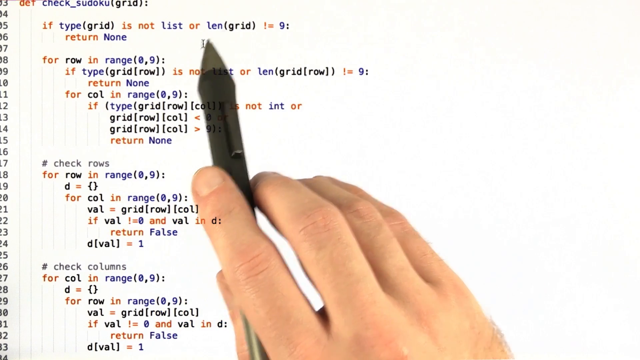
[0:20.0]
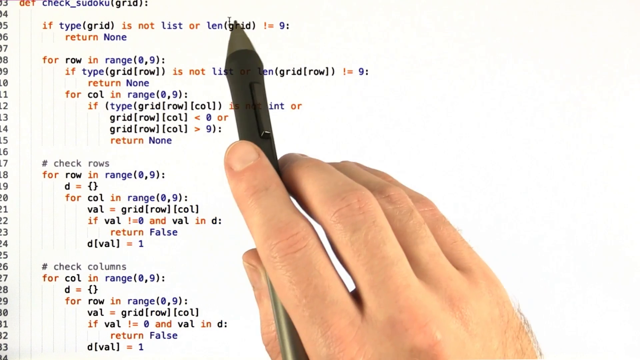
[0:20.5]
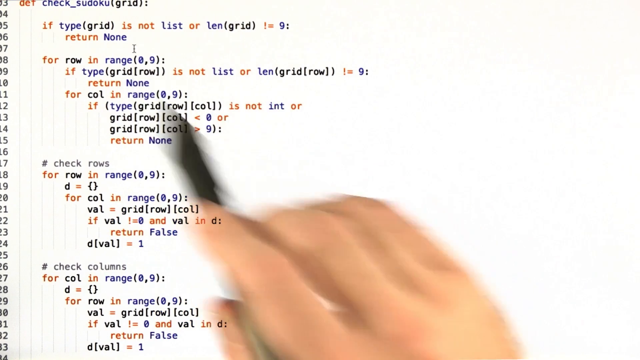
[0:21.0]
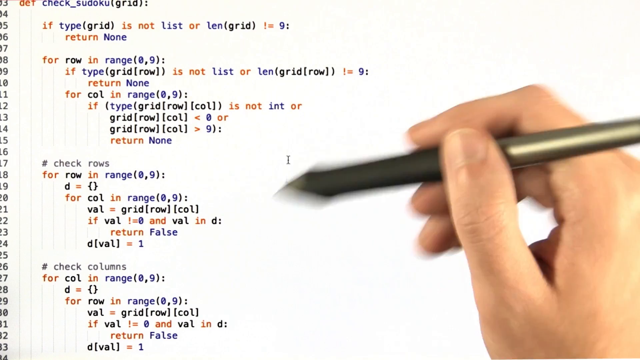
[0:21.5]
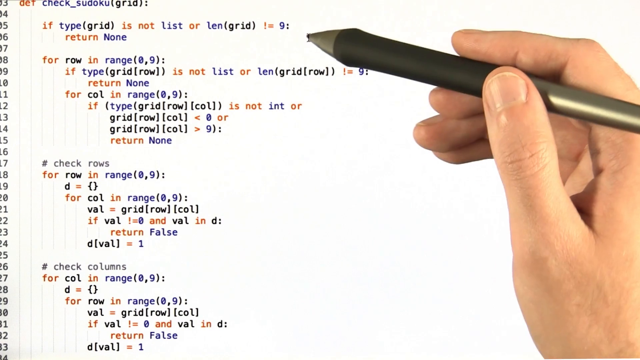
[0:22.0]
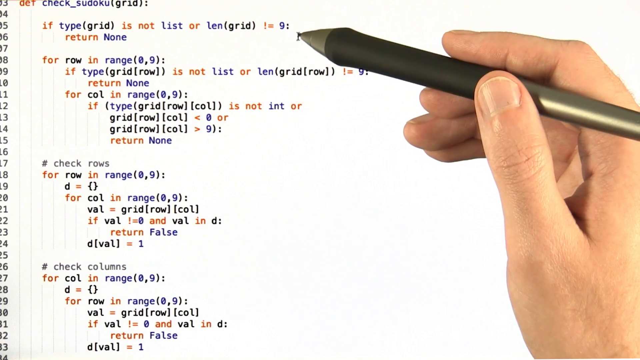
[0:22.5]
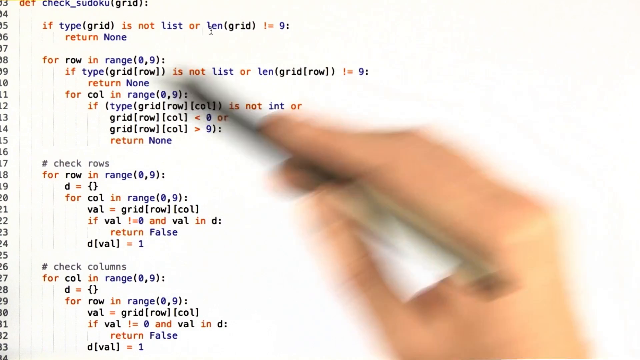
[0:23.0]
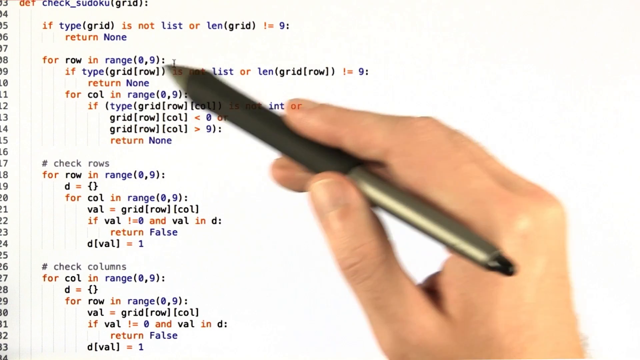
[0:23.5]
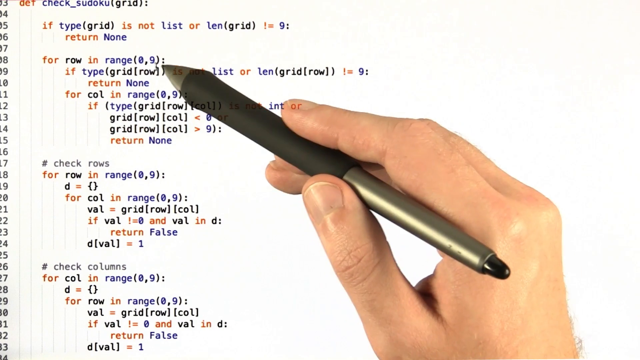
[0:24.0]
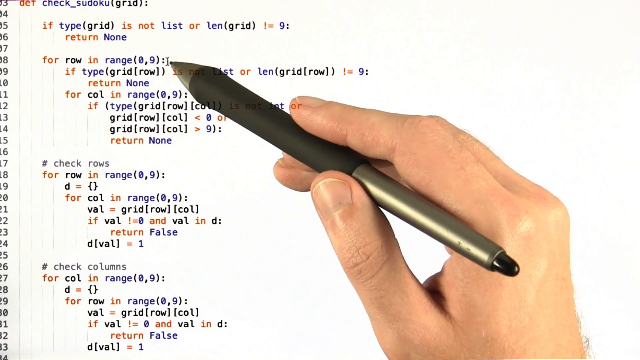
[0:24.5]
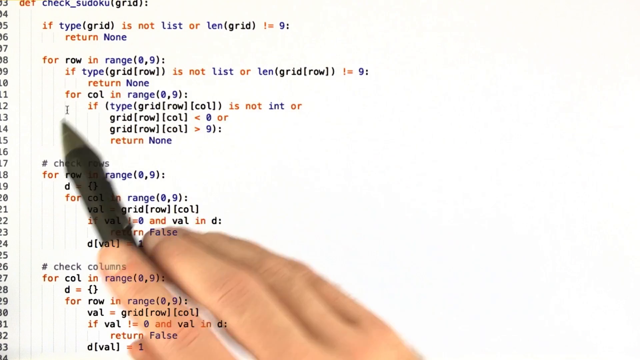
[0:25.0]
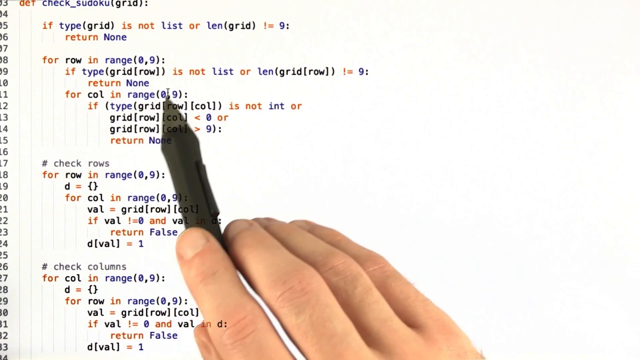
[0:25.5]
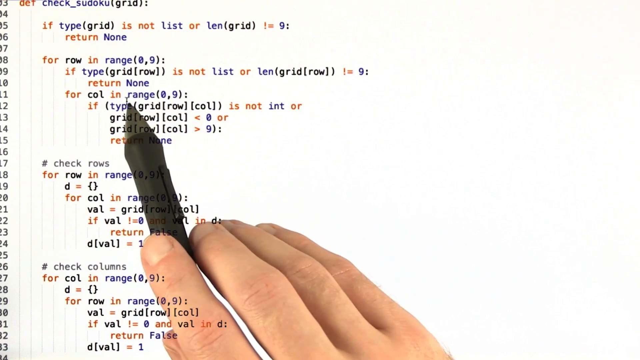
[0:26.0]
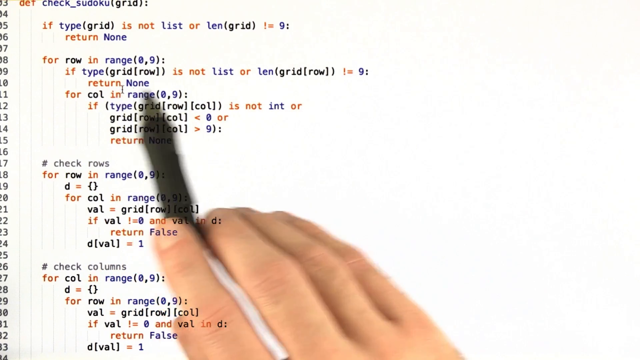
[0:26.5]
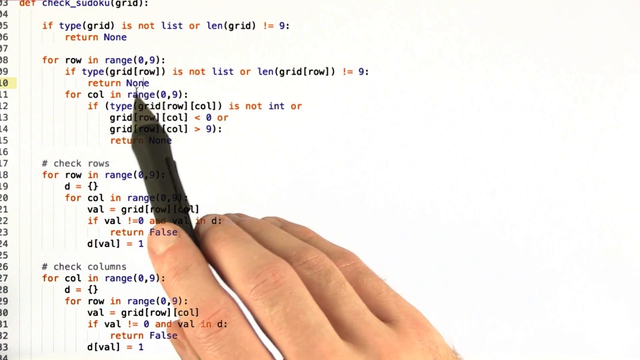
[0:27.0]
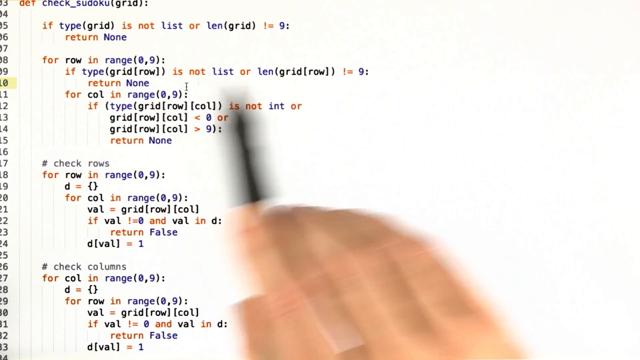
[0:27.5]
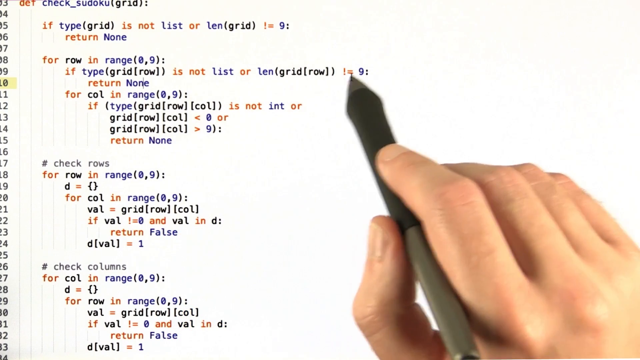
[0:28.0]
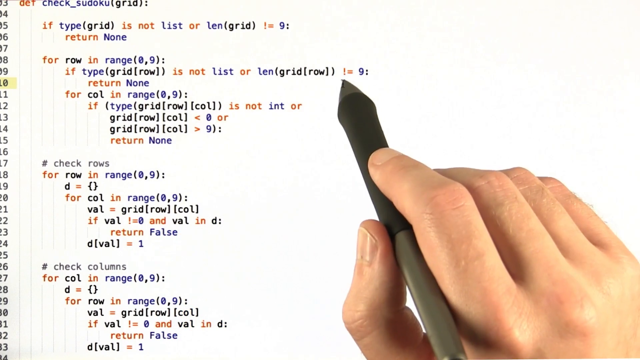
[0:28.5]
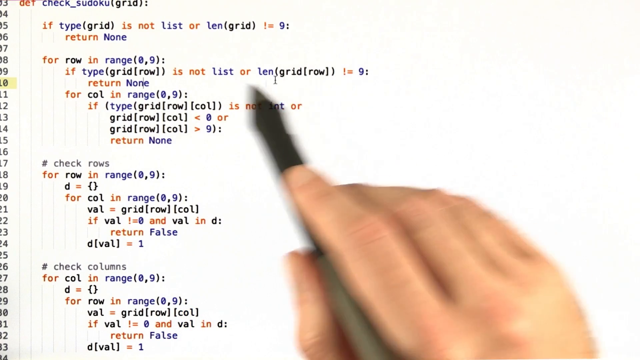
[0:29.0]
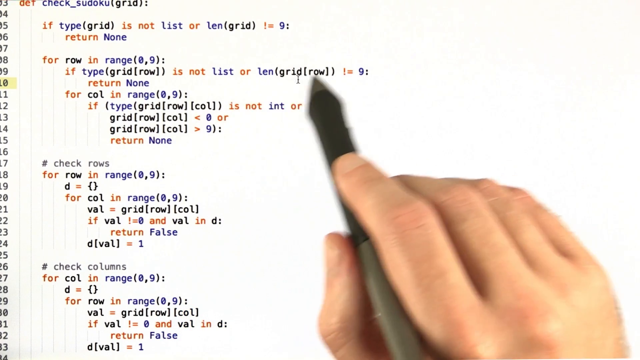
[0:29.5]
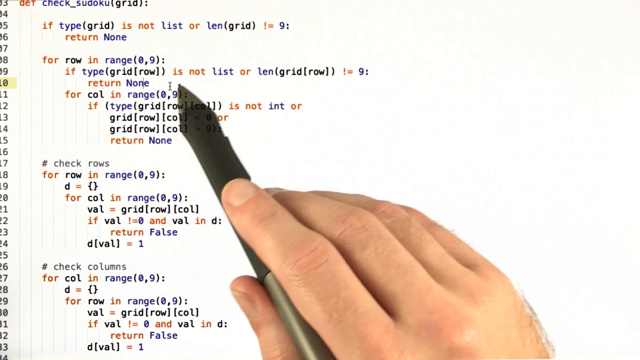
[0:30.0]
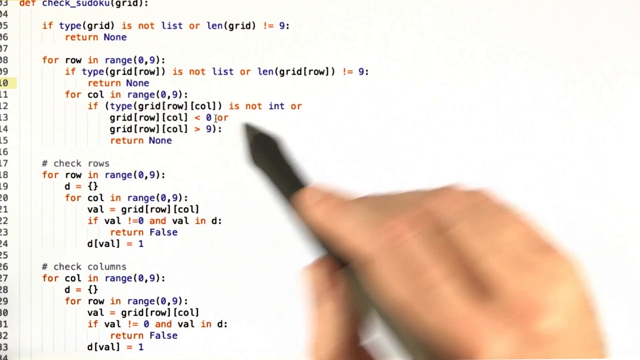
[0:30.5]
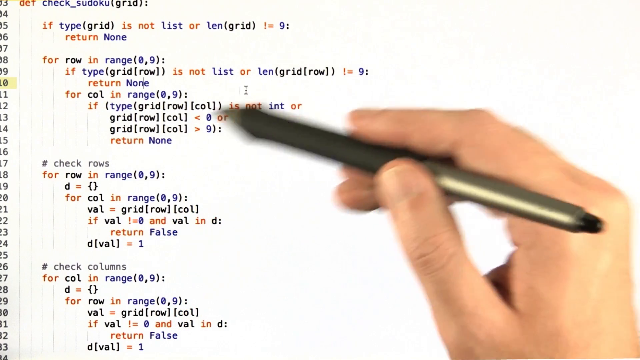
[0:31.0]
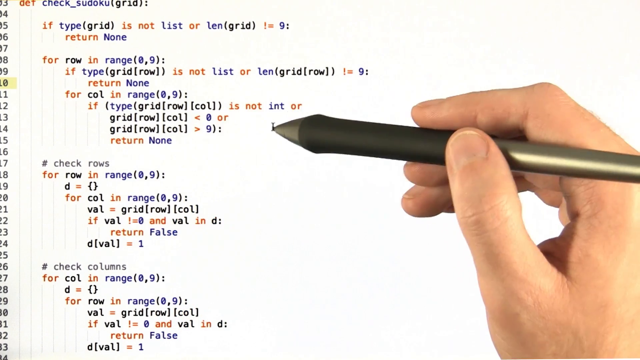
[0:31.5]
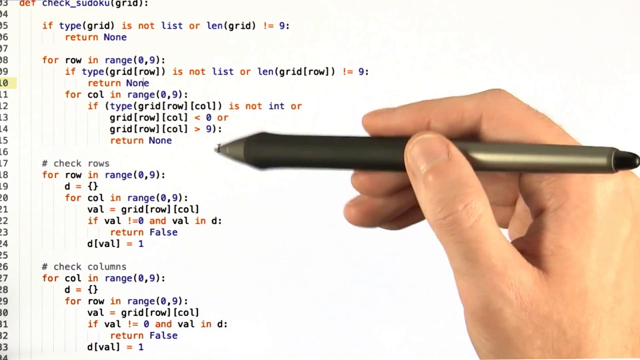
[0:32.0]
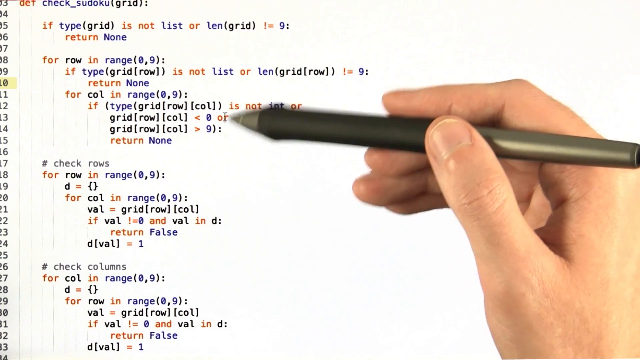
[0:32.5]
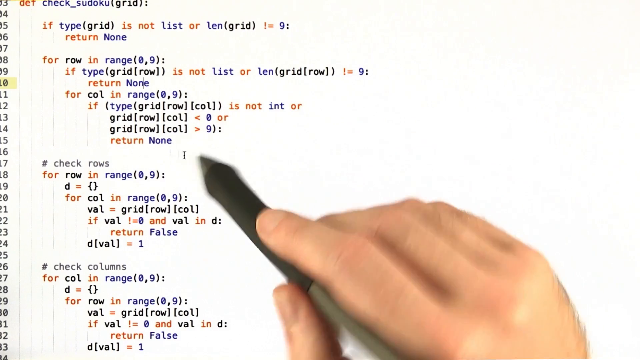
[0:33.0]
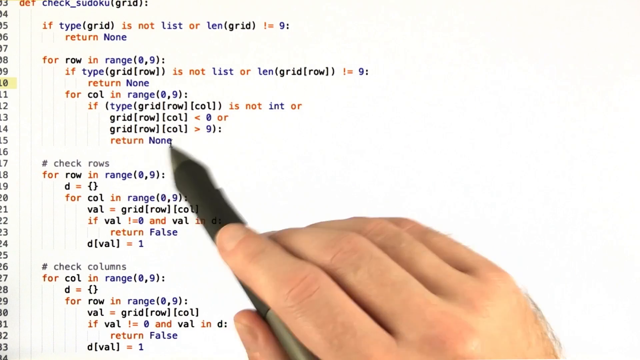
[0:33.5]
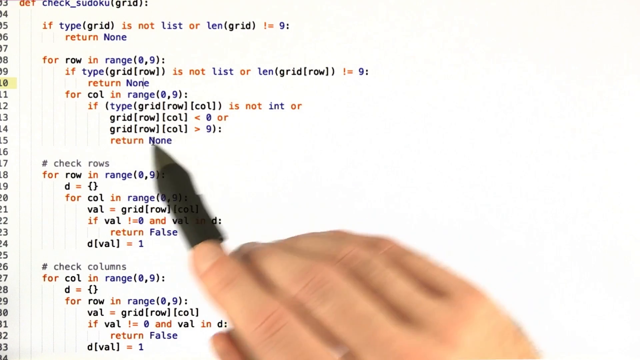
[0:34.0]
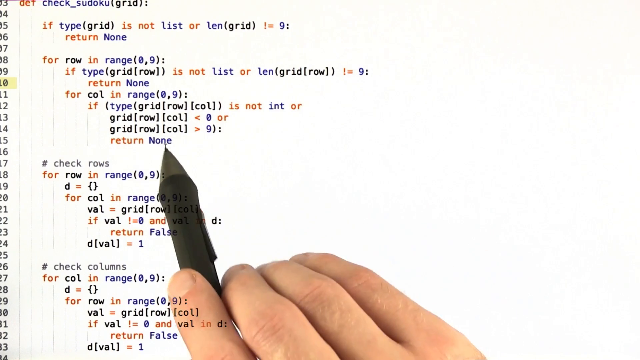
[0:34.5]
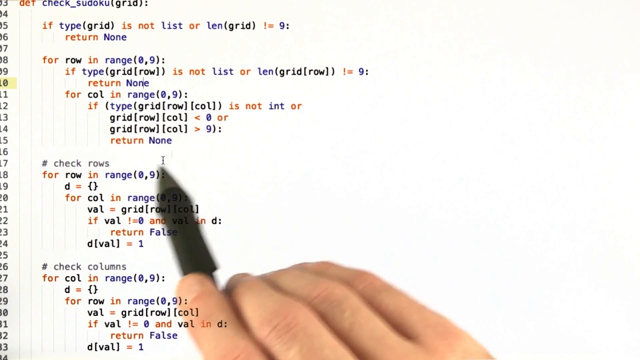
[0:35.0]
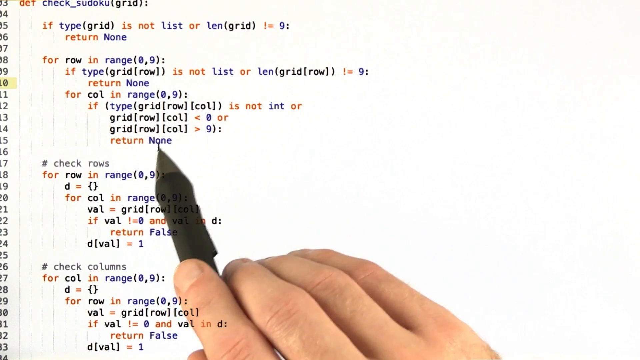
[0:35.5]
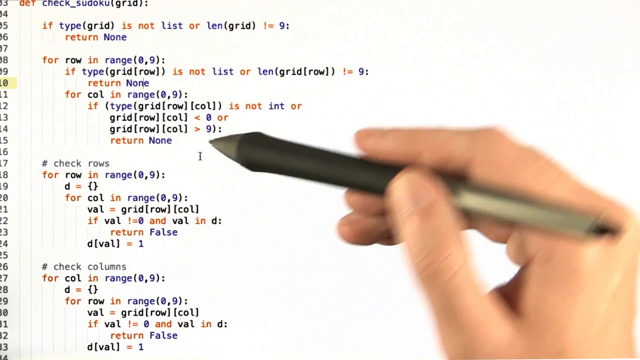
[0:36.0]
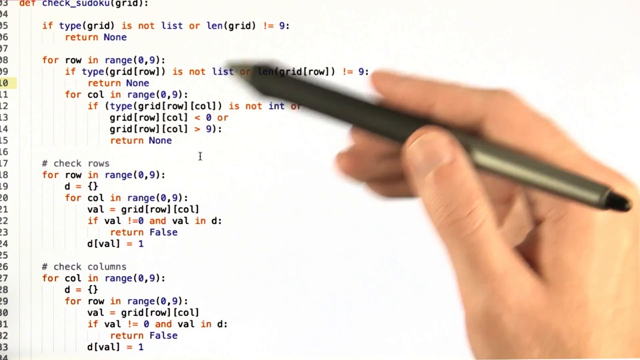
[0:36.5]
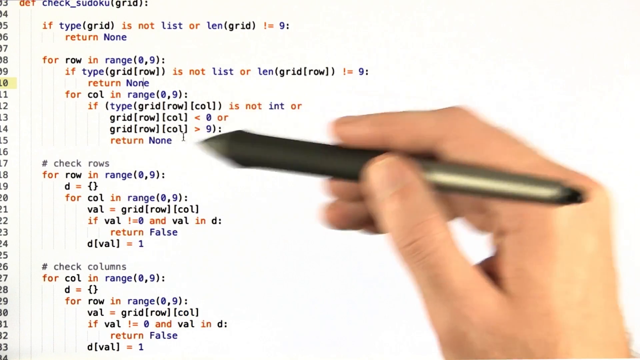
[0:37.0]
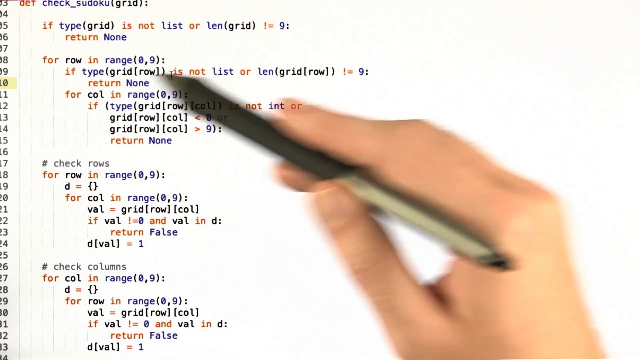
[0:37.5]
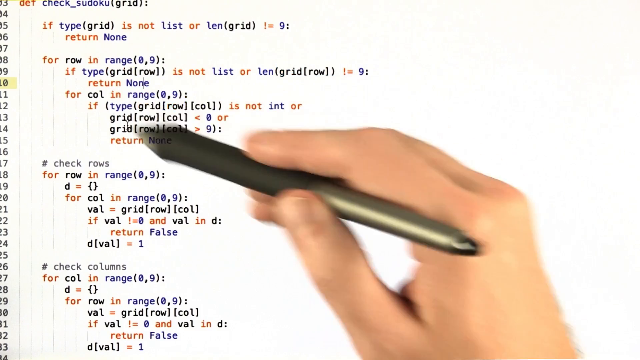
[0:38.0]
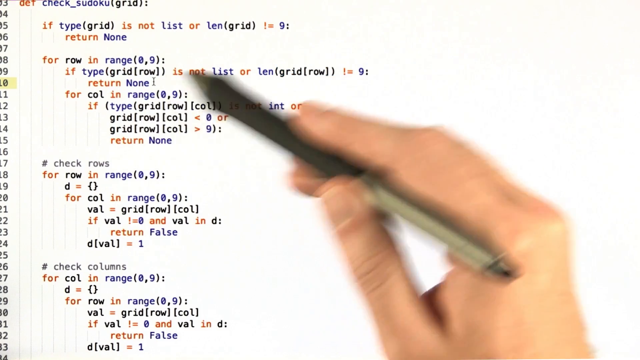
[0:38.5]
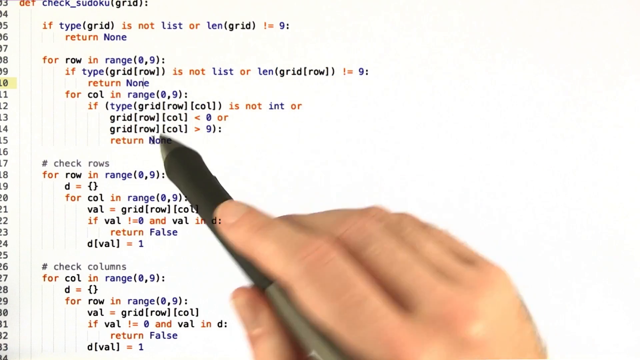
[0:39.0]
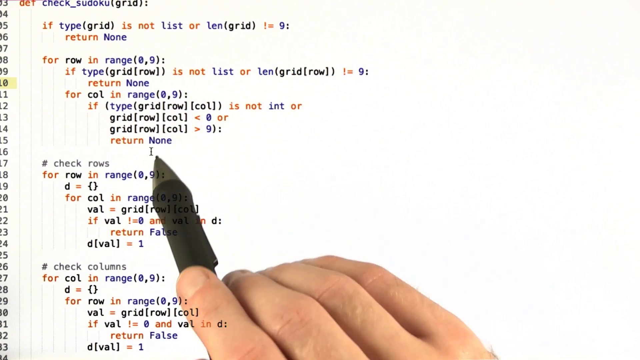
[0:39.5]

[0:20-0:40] Only the person's right hand is visible, holding a digital pen and moving back and forth over a computer screen showing code. There are some if statements at the top, and in the middle part of the code is a comment with a hashtag, "check rows", followed by a for statement. There are roughly 20 lines of code, probably. The code is in orange, blue and black font: the if and for statements at the beginning are orange, and the rest looks purple or blue and black. Line numbers run down the left-hand side, apparently starting at three and going down to about 29 or 30, with the code to their right. The screen does not change during this part.